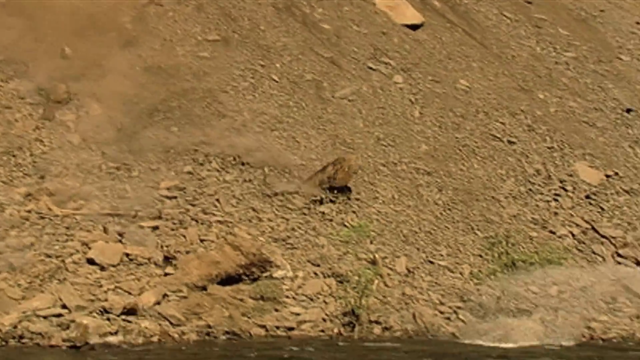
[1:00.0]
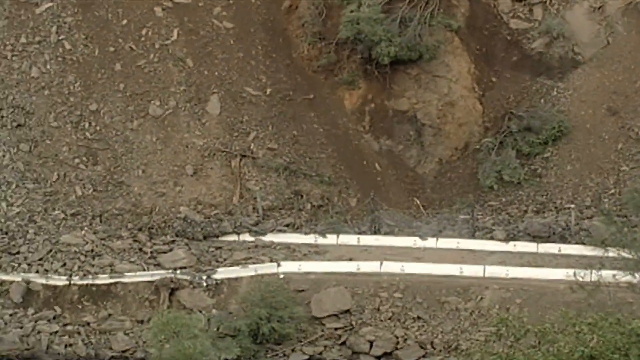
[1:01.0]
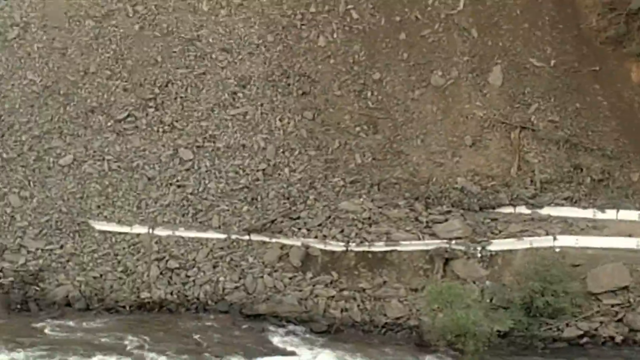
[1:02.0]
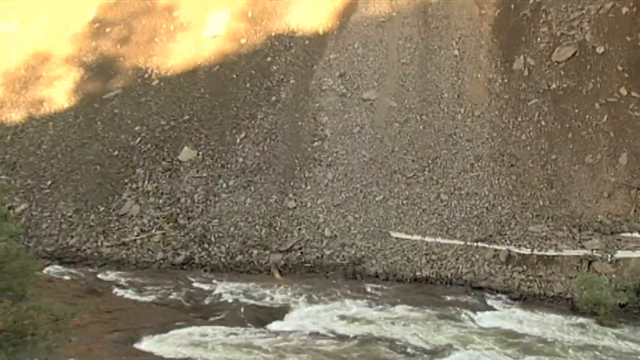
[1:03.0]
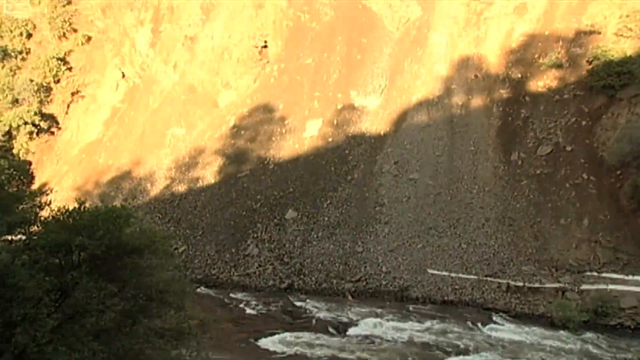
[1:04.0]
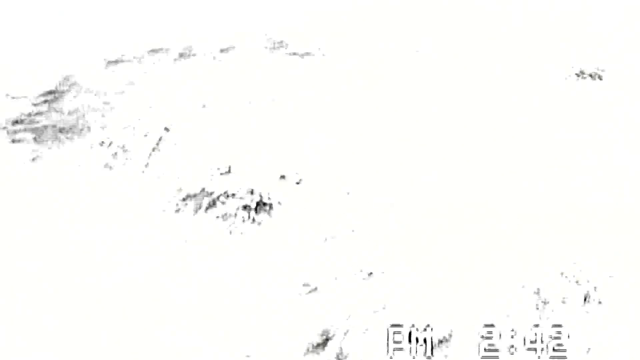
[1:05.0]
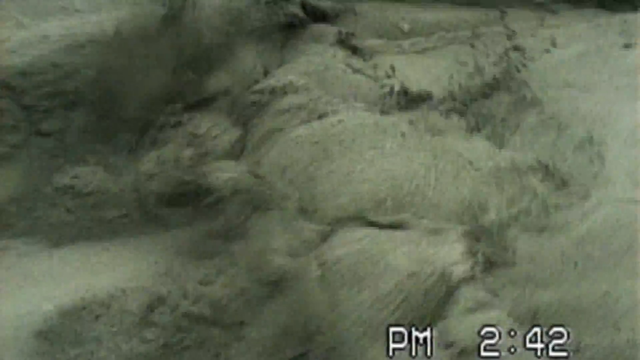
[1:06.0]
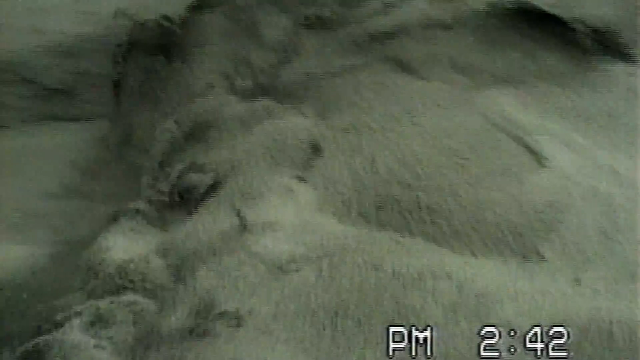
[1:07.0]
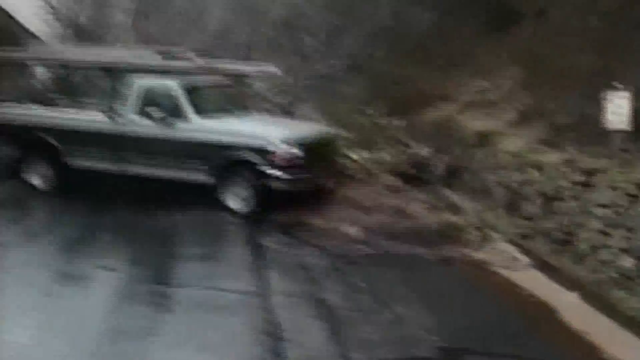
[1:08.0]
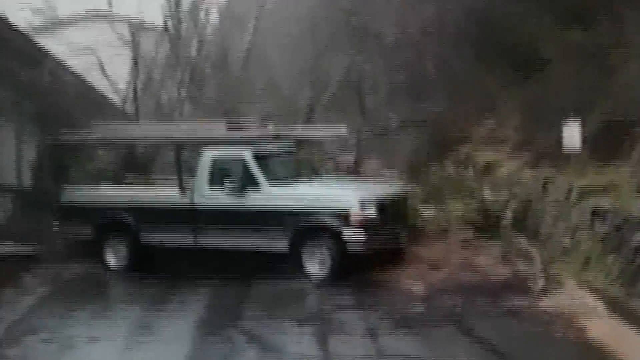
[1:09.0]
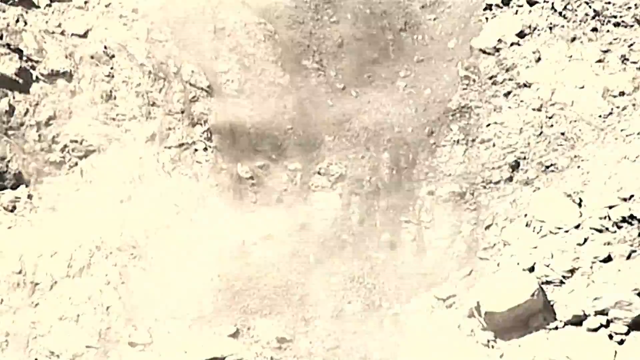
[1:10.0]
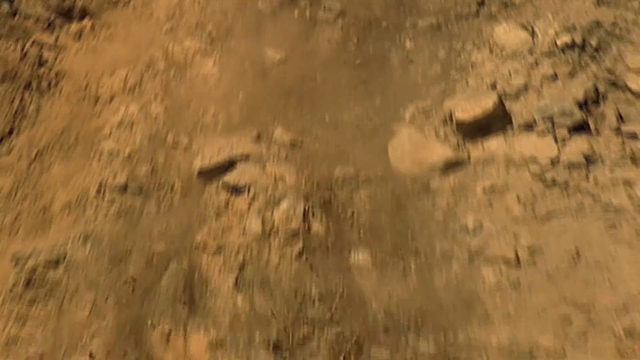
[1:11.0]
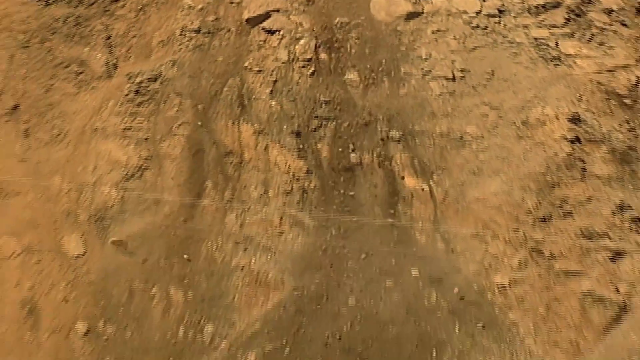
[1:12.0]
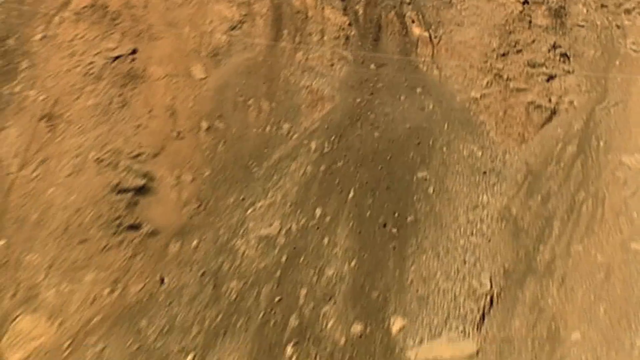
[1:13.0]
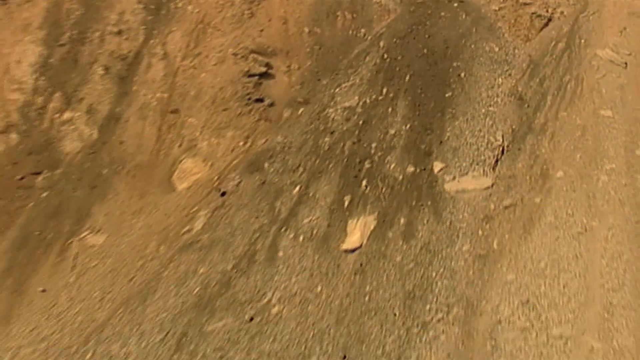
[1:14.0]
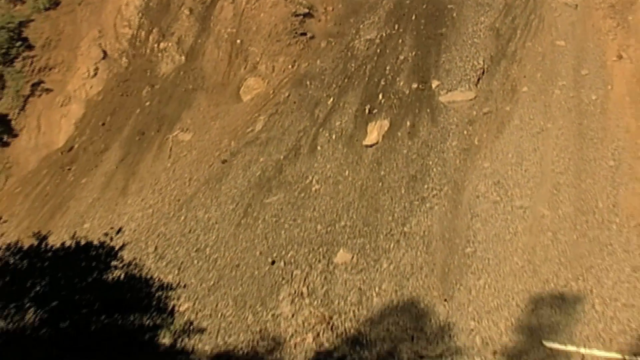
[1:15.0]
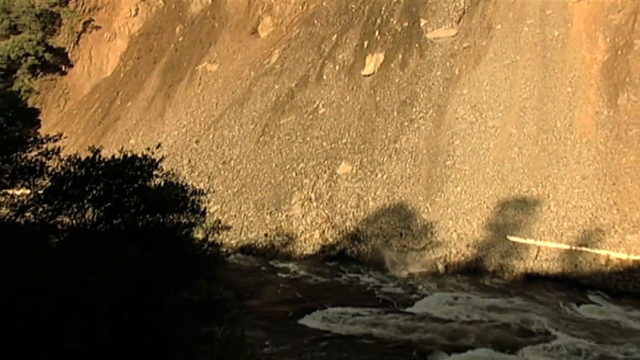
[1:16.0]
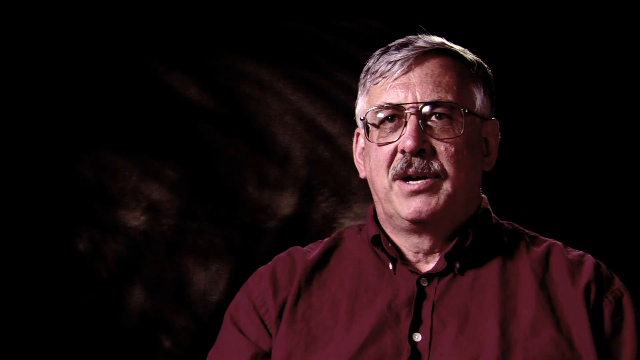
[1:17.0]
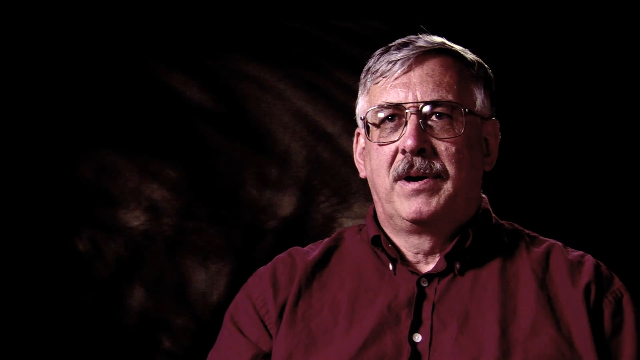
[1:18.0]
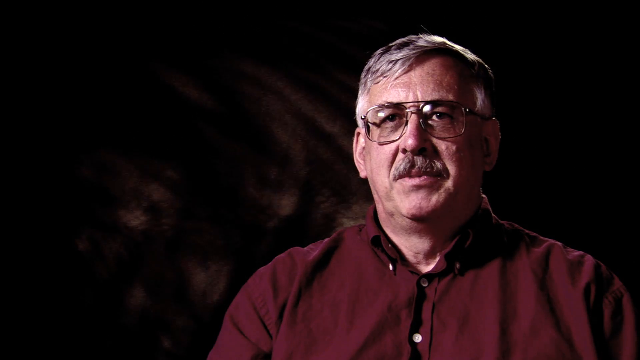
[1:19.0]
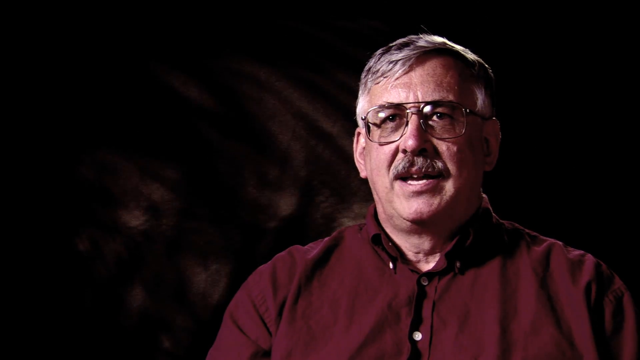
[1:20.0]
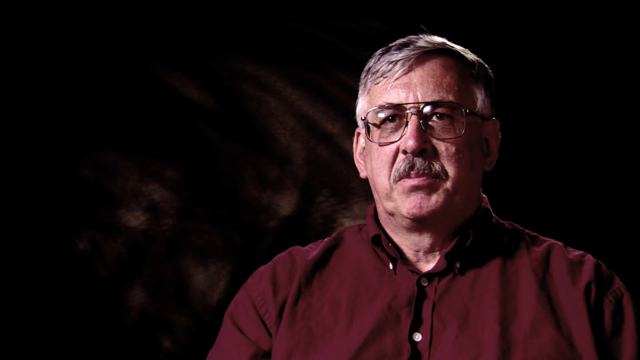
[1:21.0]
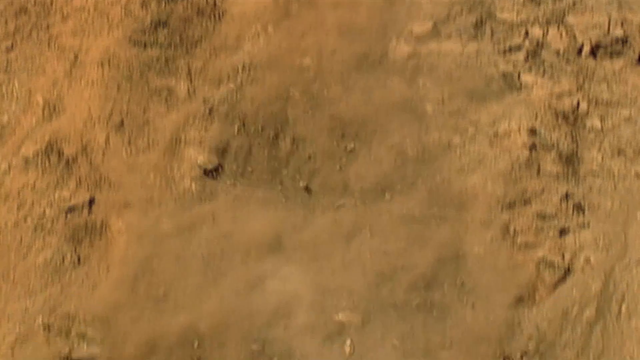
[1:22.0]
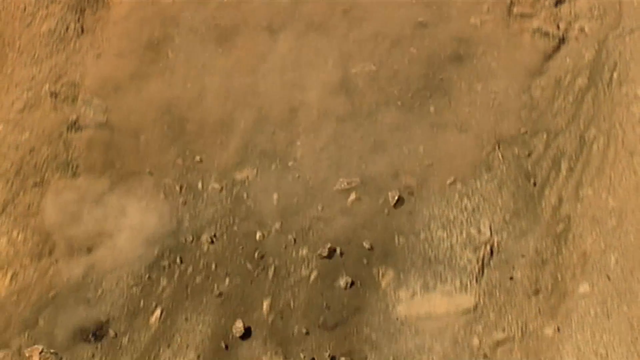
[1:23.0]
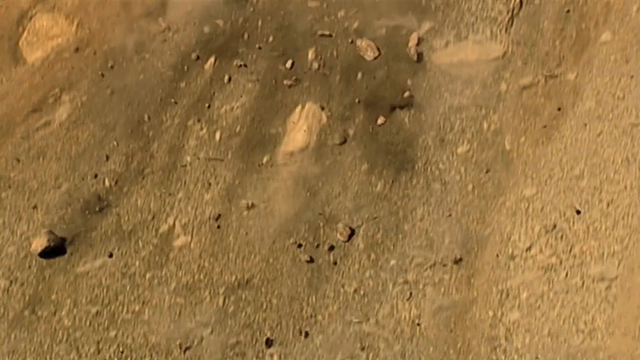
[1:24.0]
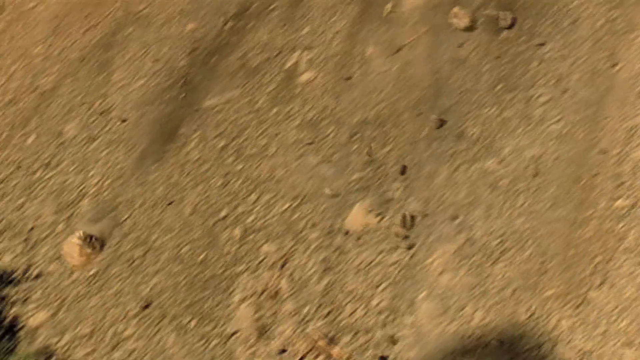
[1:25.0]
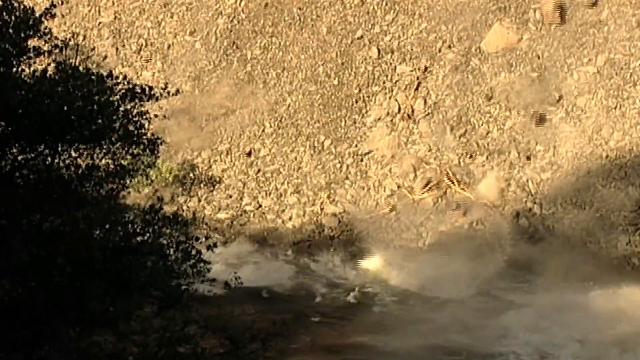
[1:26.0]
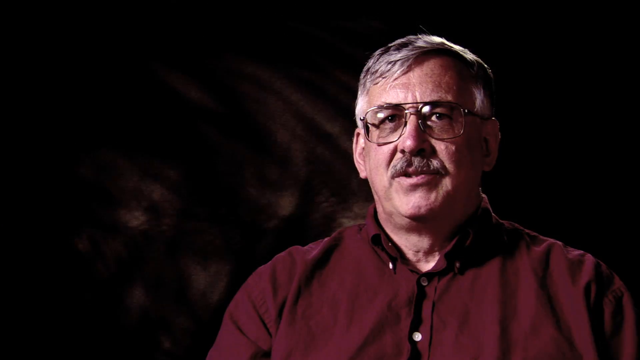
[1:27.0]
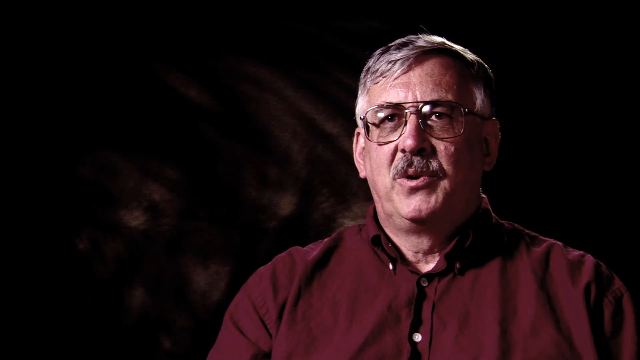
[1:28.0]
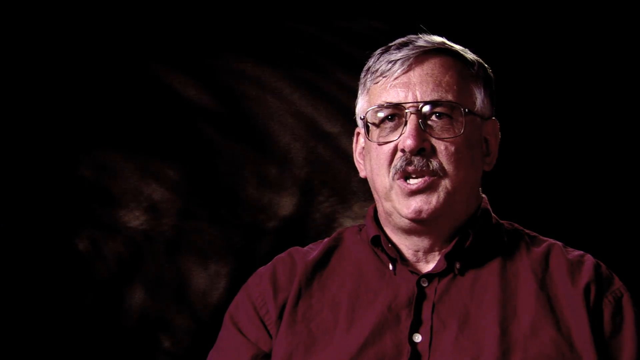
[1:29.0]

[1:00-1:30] On the brown, rocky side of a mountain, rocks of all sizes, from huge to small, plummet straight down from high above, landing in a dark gray river with rapid waters; the rapids have white caps, and the river runs eastward. A very close-up, somewhat grainy video, possibly captured by an onlooker, shows the water and rocks slamming into each other, with a pickup truck parked diagonally on the left side of the frame. The camera pans away from a large dark mountain, capturing vast rocks falling down to the water below. A quick shot shows the interviewed gentleman, Jerry, apparently seated, with a black background behind him in a dark room that highlights only him. He appears to be in his early 60s, with gray hair and dark-rimmed glasses.